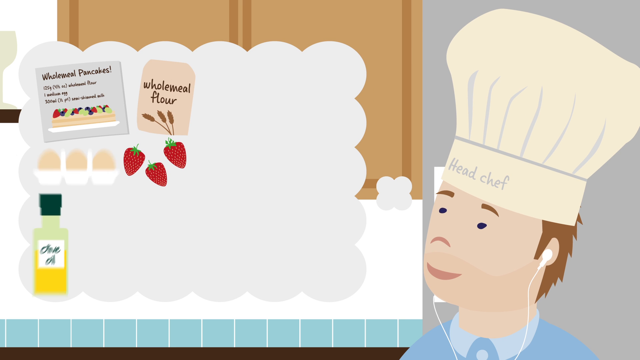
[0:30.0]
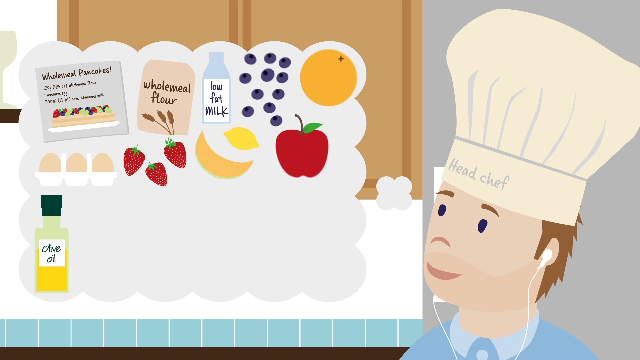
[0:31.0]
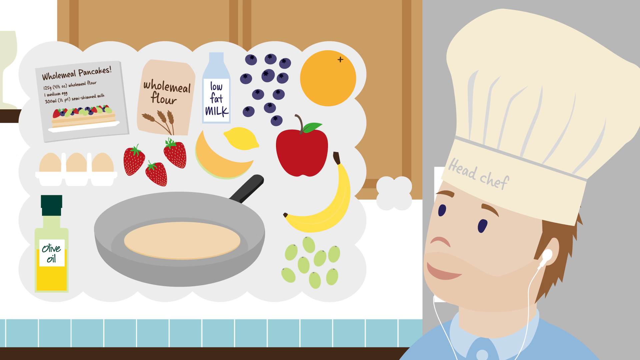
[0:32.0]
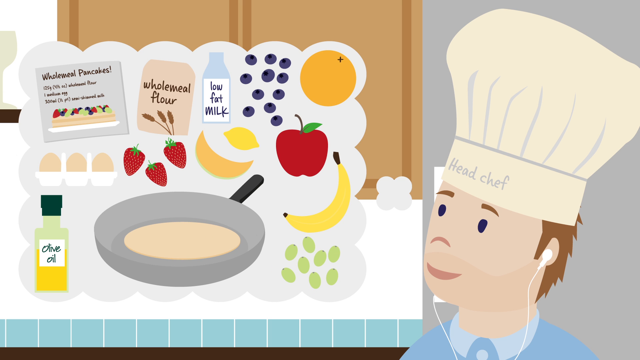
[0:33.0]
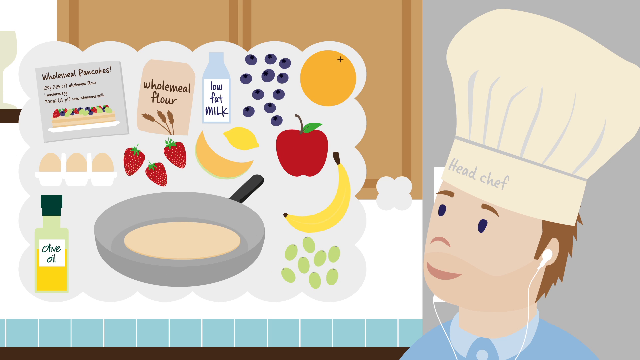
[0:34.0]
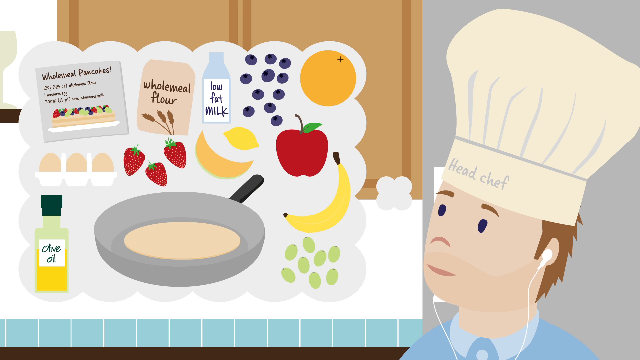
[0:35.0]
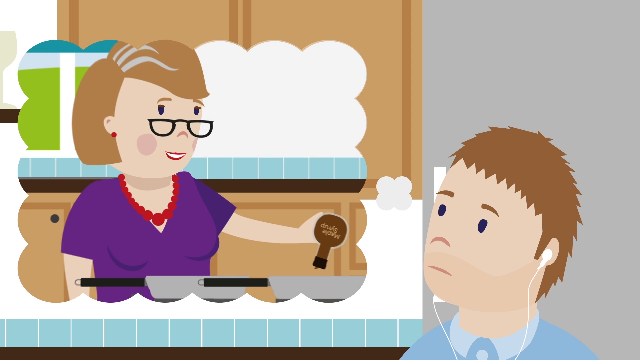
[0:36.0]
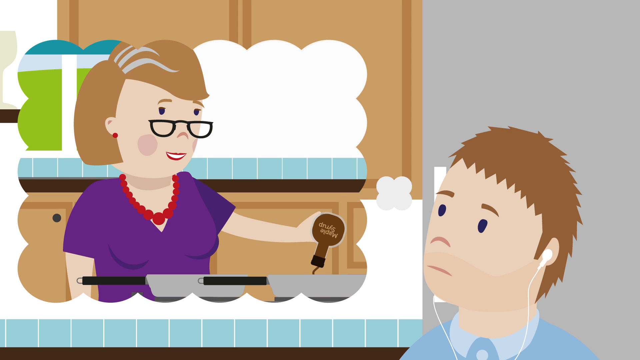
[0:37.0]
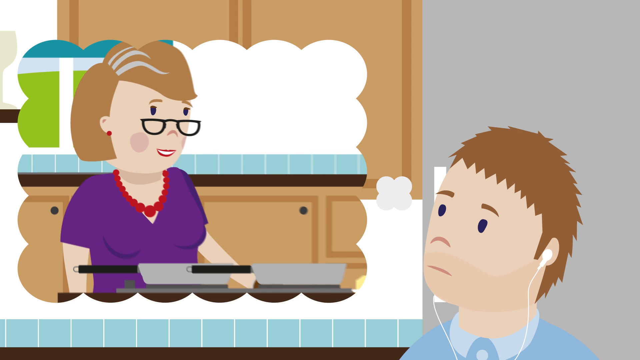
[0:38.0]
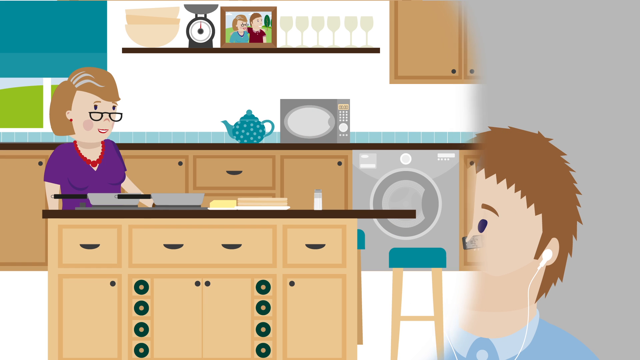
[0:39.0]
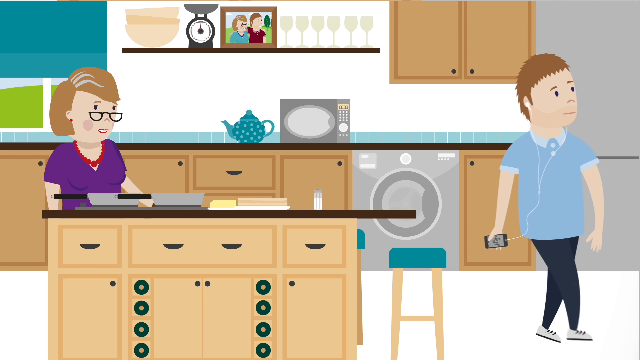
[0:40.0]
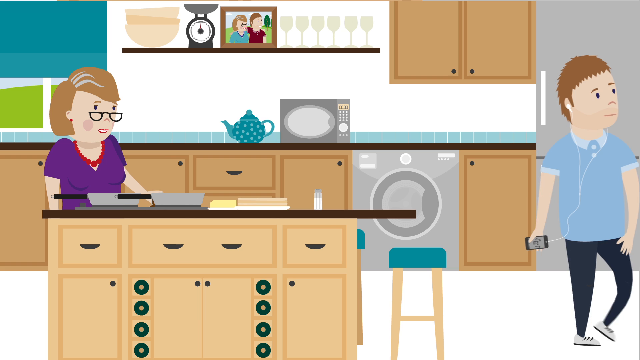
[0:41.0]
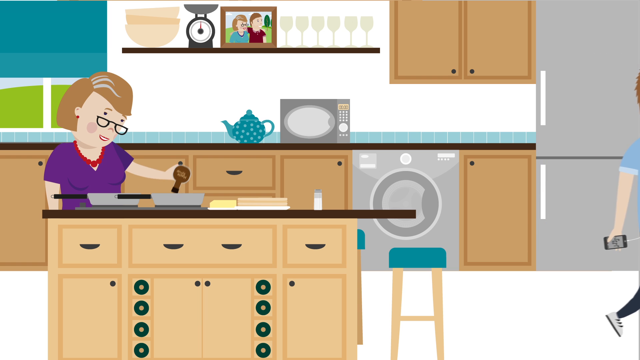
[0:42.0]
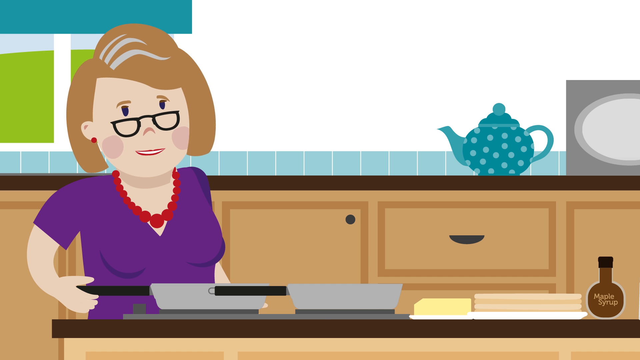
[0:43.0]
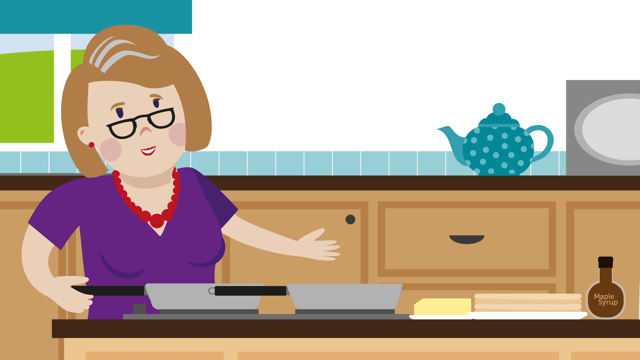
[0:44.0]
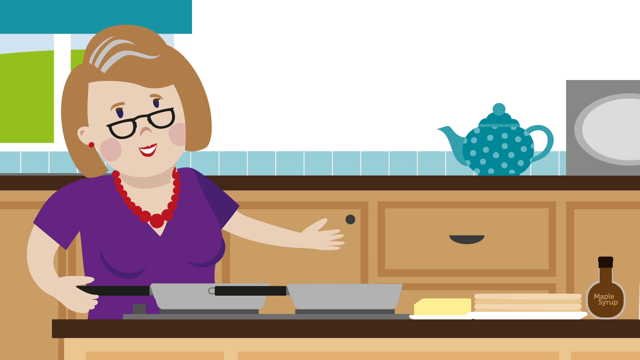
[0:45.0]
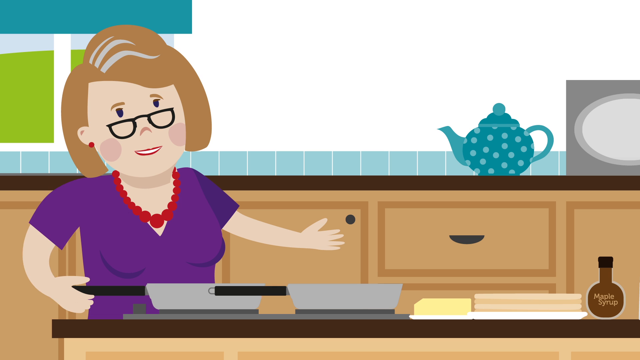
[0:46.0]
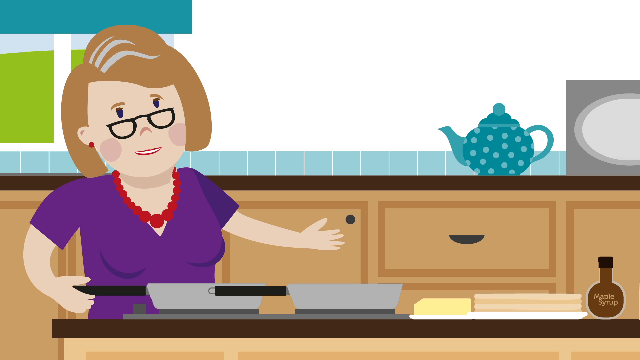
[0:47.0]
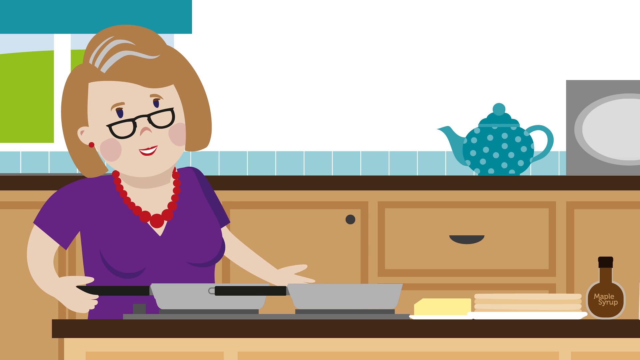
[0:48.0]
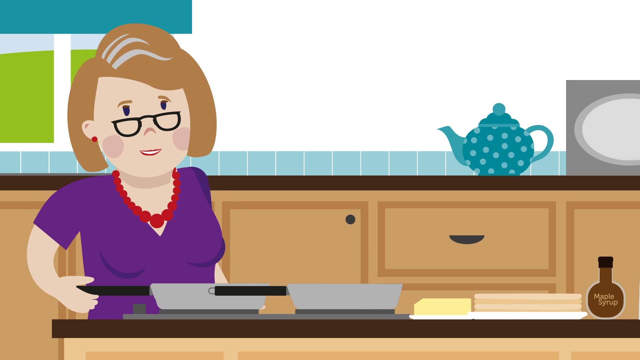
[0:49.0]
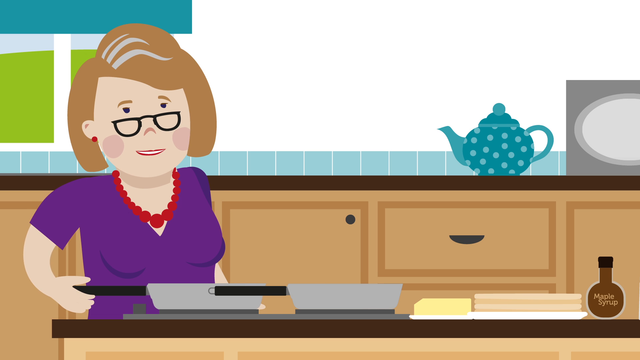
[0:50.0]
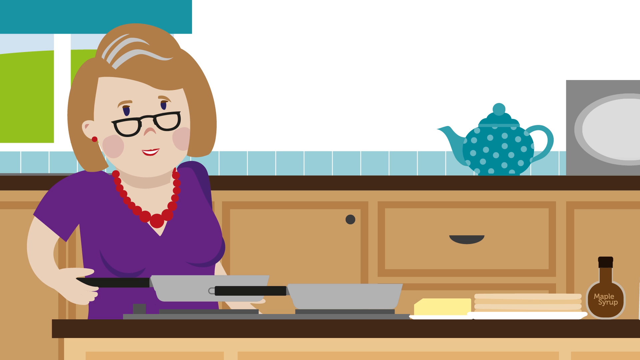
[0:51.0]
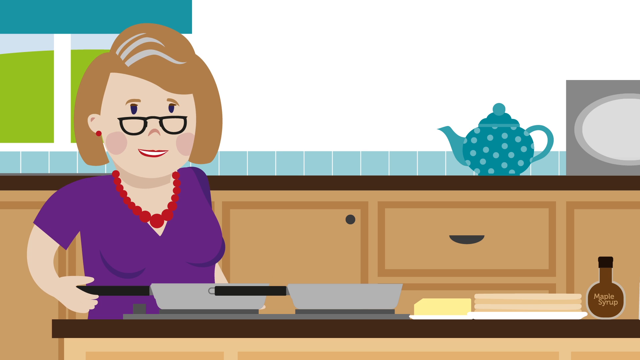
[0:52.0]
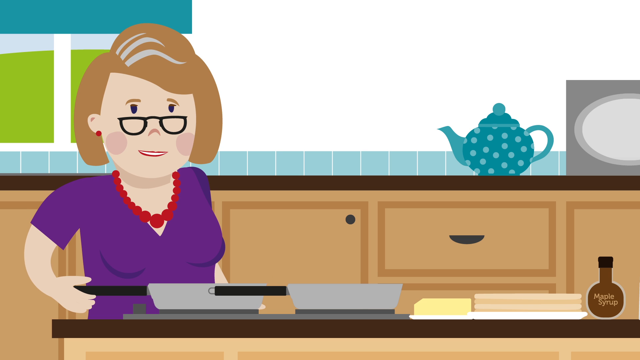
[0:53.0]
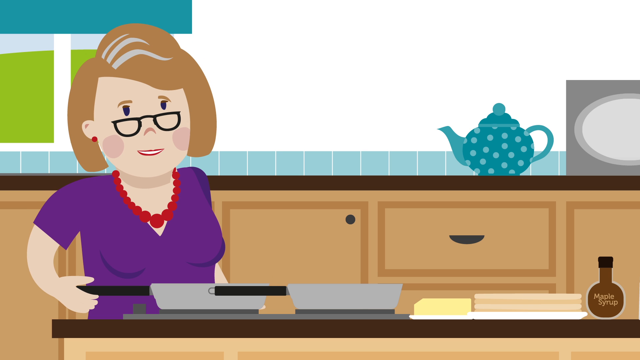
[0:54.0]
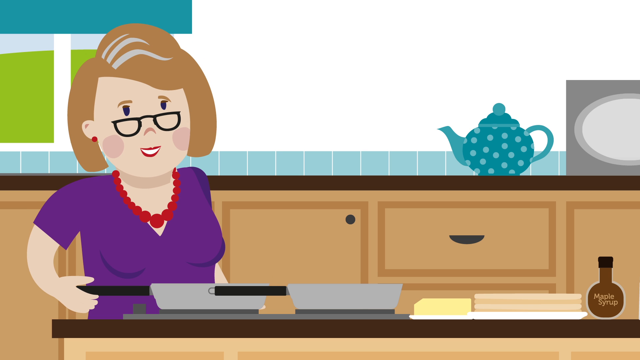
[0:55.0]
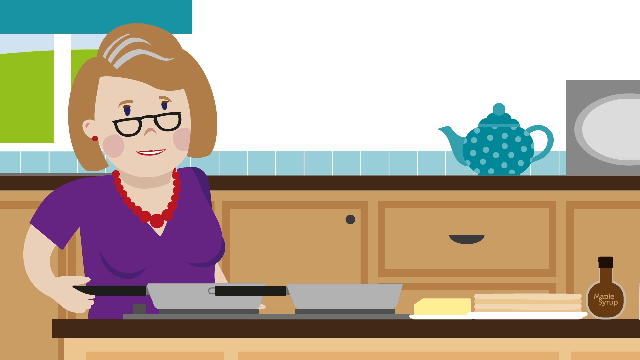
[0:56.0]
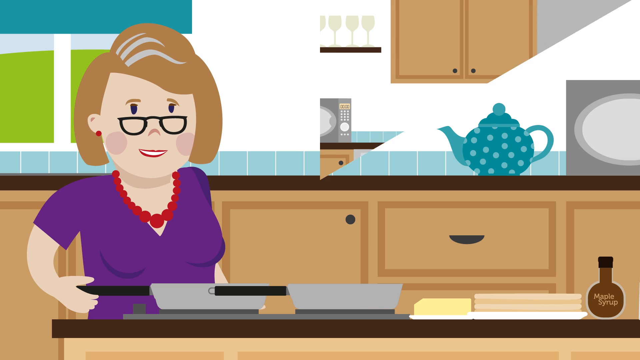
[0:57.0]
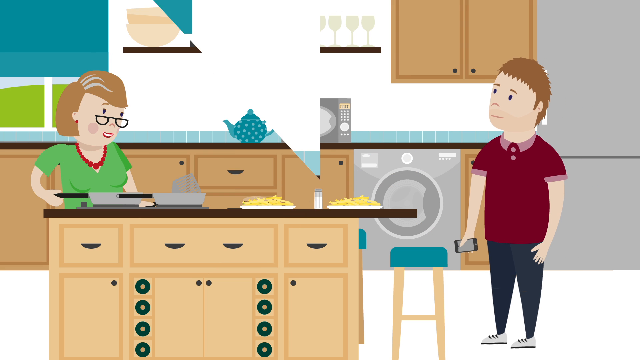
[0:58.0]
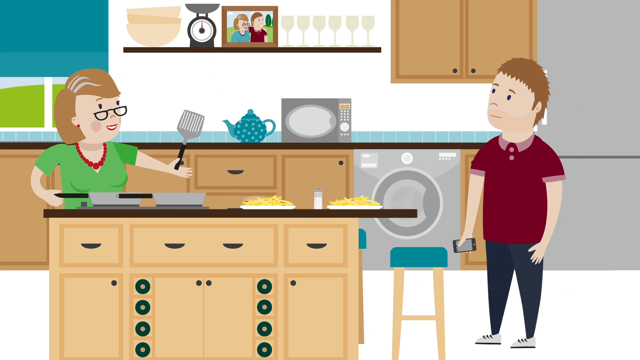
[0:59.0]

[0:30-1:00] Ingredients appear, such as wheat, flour, whole wheat, wholemeal flour, pancakes and olive oil, with brown cabinets and blue-gray walls behind. There is not much movement. The view returns to the teacher in a close-up at the island stove, with pots and pans on the stove island and the walls in the background. Another male in a reddish-purple shirt walks up. A close-up of the head chef shows strawberries, whole milk, flour, low-fat milk and eggs in a little cloud, and cantaloupe or onion in a little white square cloud. In the square cloud, a pot or pan holds what appears to be pancakes. A blue teapot with white-blue dots is on a table or counter behind the teacher lady, who wears a purple dress and a red necklace.